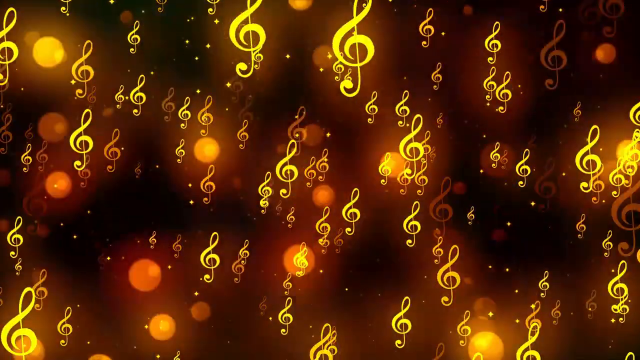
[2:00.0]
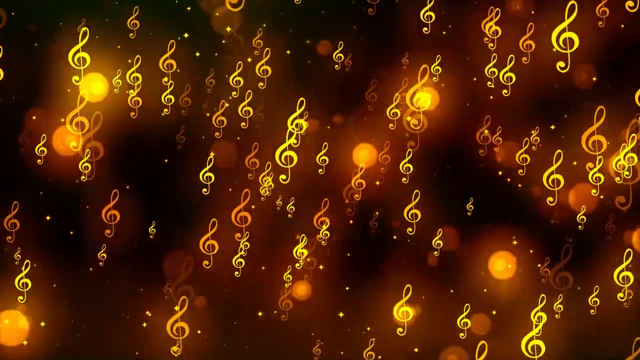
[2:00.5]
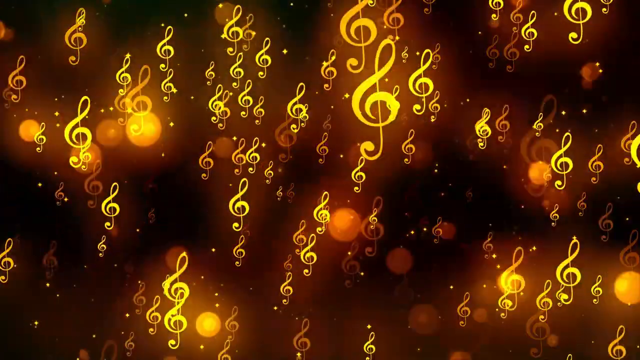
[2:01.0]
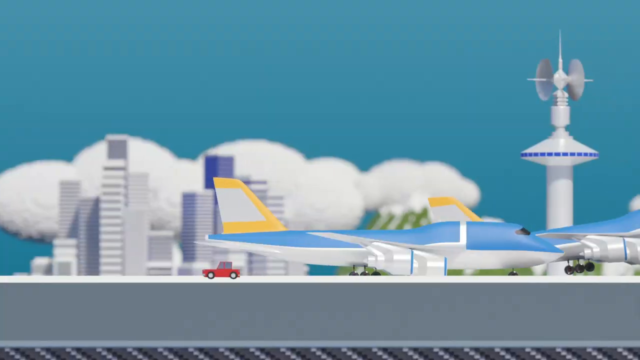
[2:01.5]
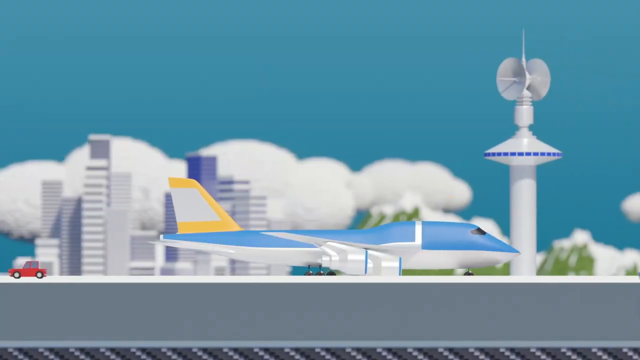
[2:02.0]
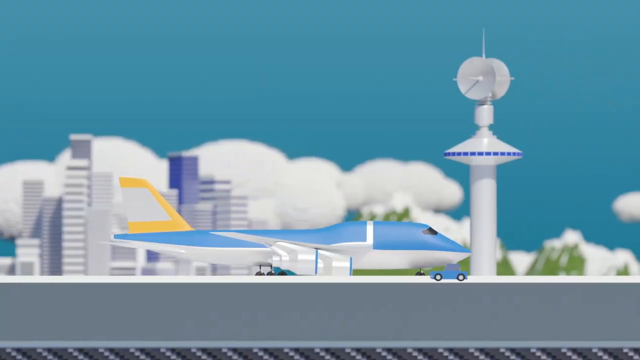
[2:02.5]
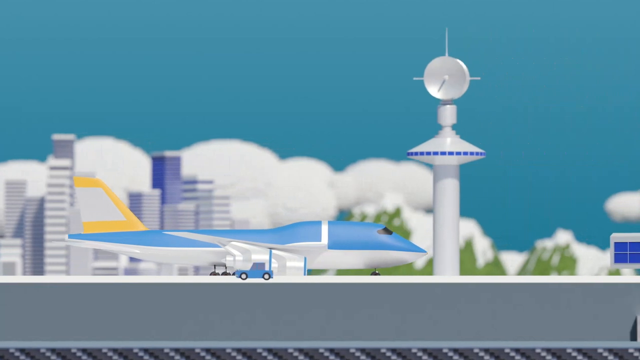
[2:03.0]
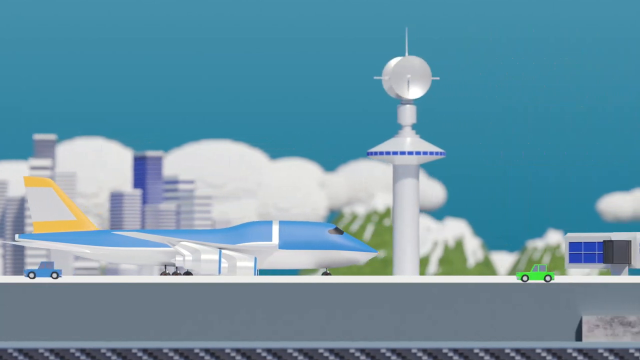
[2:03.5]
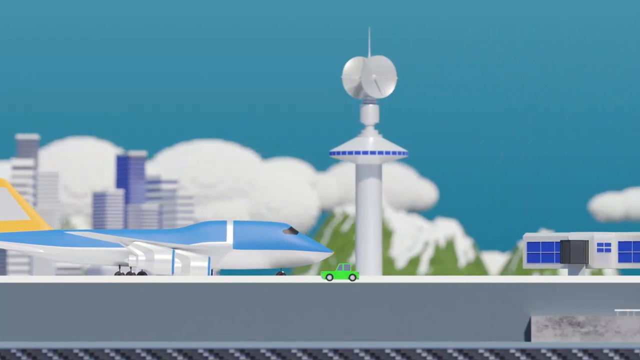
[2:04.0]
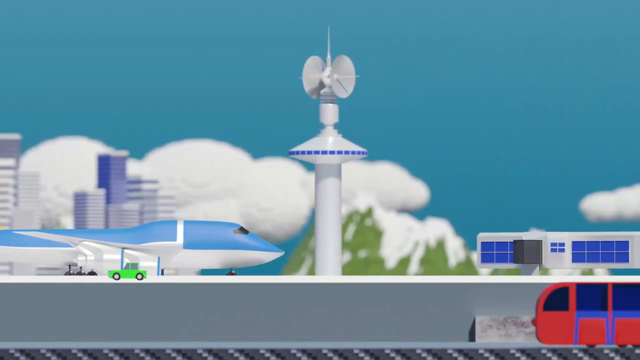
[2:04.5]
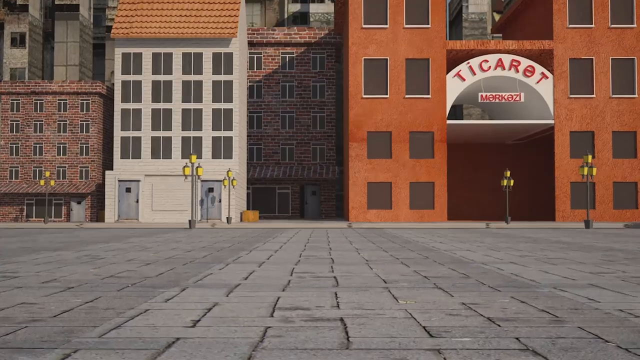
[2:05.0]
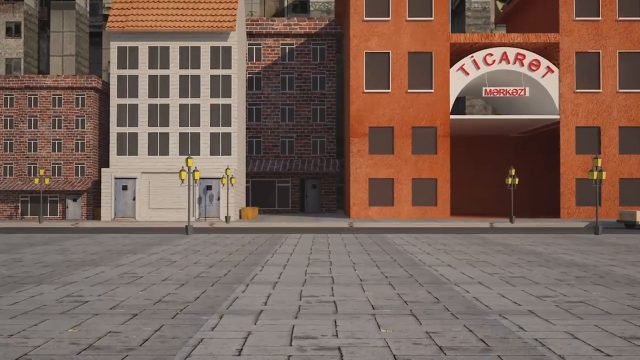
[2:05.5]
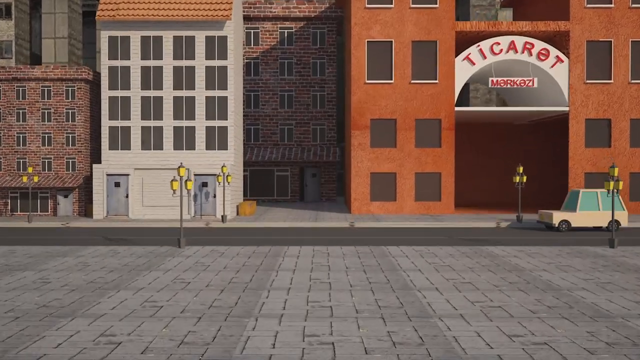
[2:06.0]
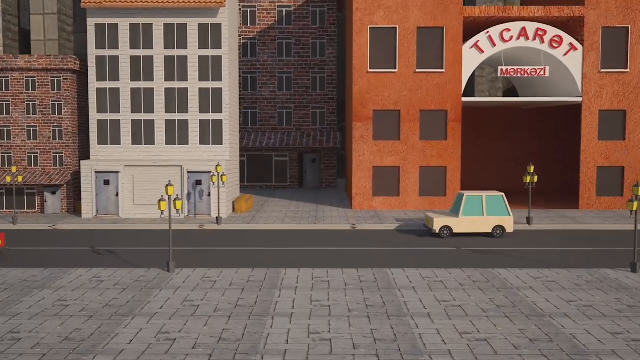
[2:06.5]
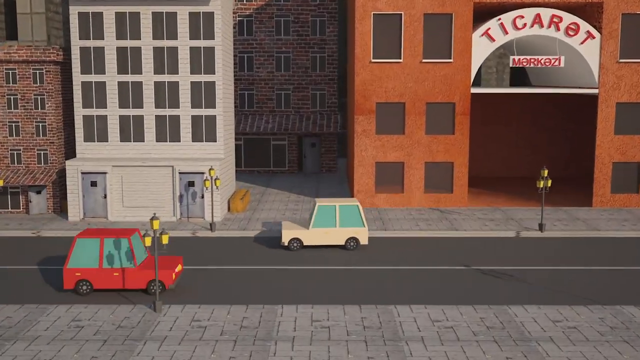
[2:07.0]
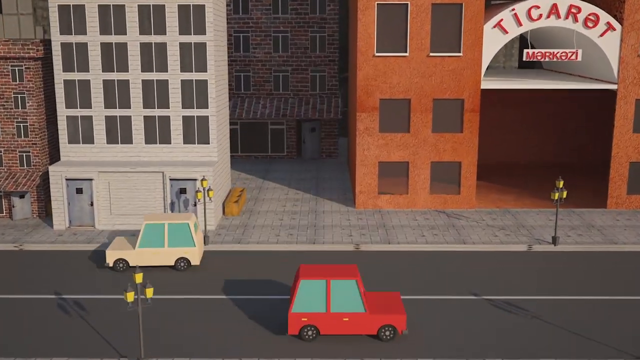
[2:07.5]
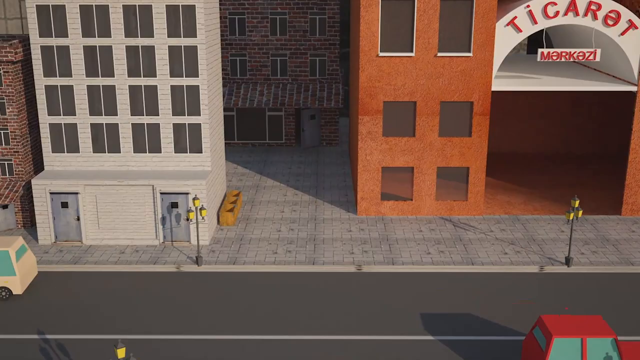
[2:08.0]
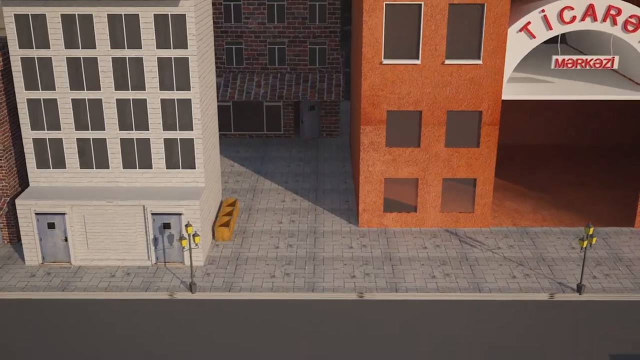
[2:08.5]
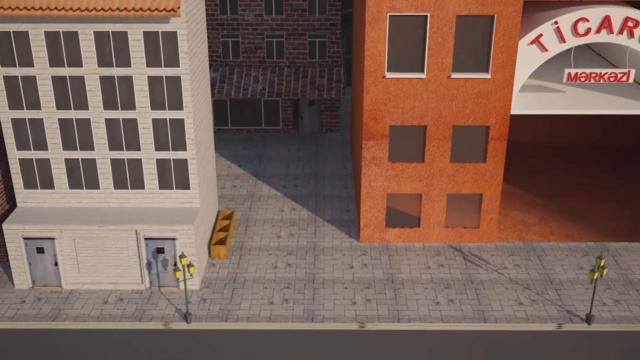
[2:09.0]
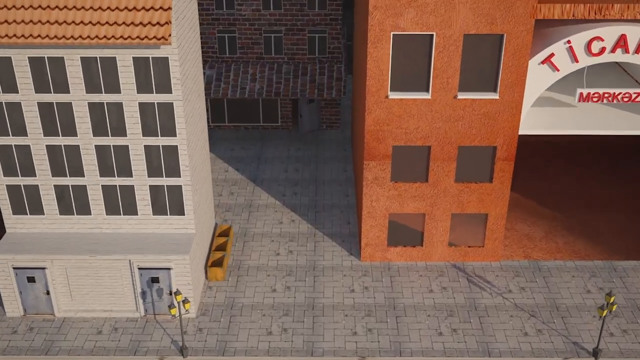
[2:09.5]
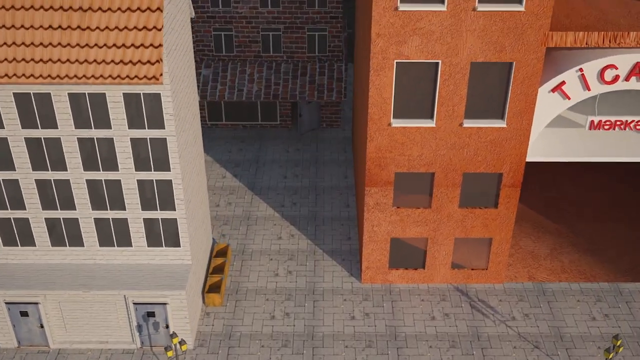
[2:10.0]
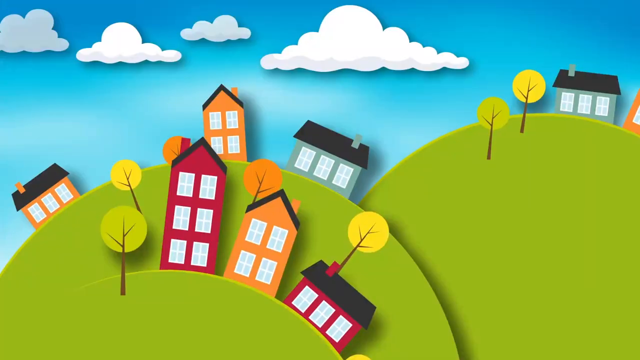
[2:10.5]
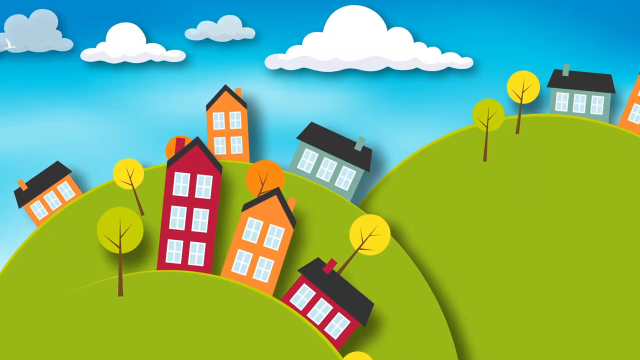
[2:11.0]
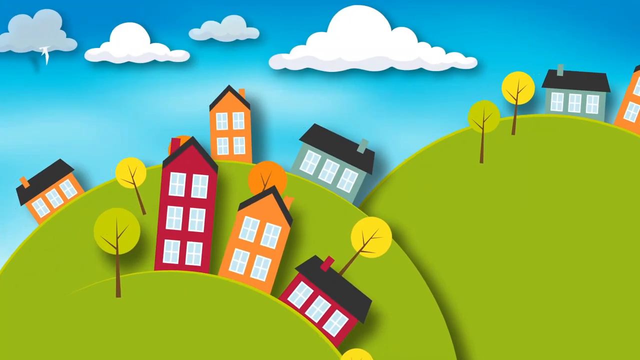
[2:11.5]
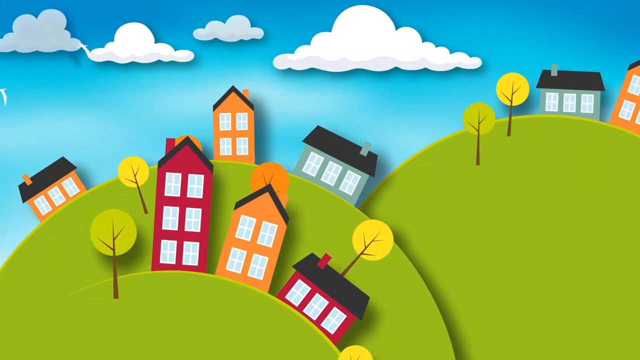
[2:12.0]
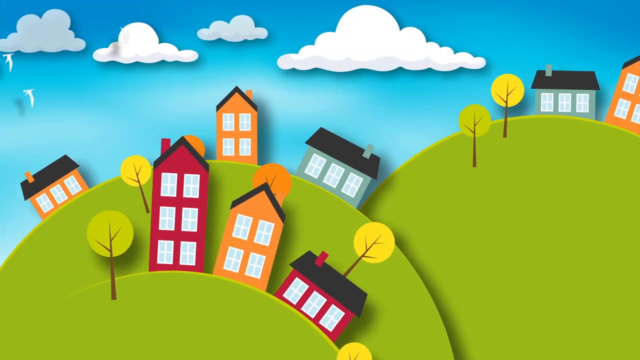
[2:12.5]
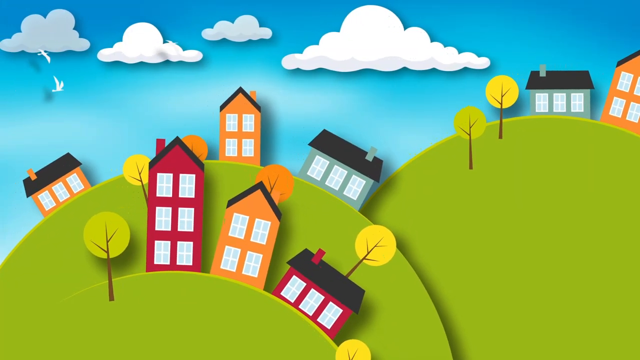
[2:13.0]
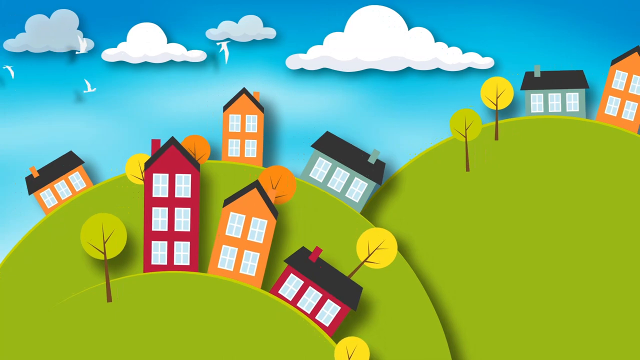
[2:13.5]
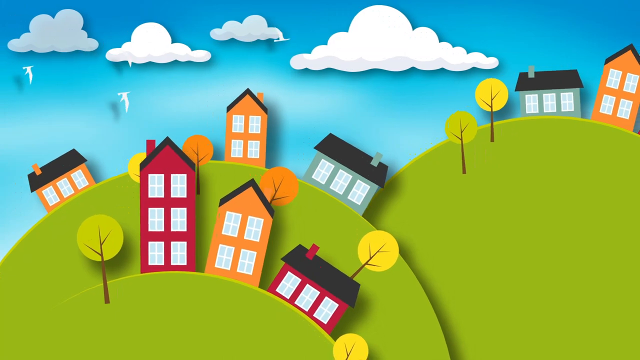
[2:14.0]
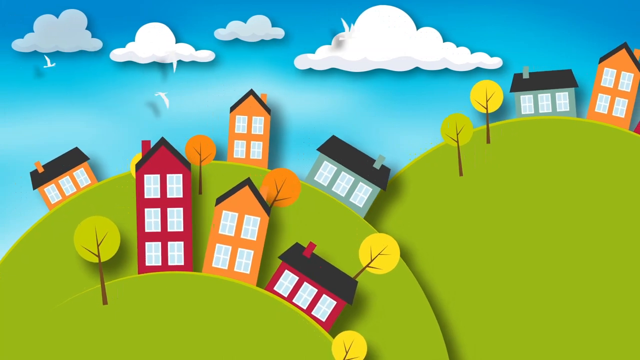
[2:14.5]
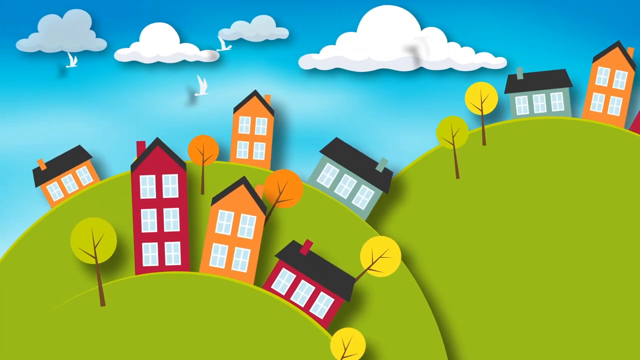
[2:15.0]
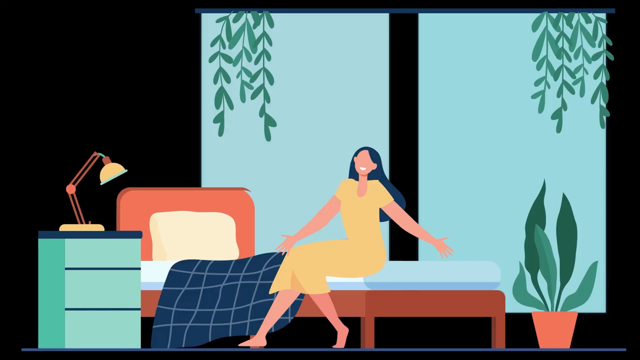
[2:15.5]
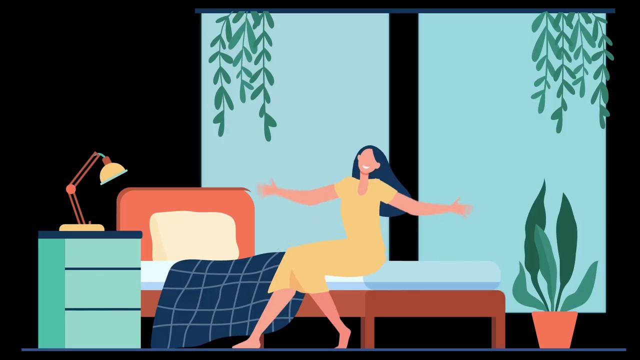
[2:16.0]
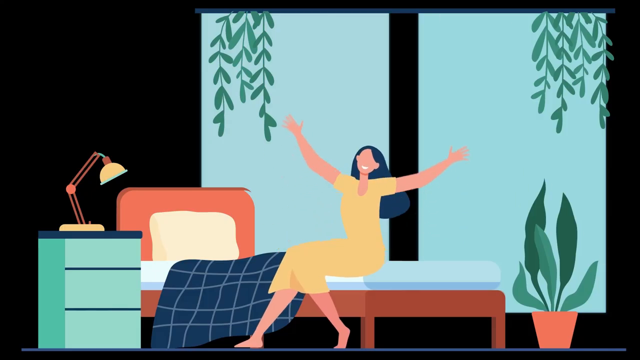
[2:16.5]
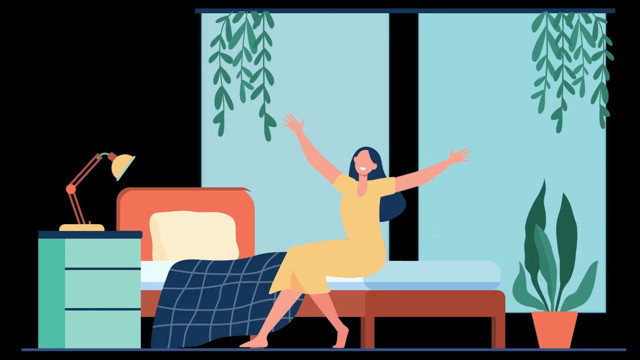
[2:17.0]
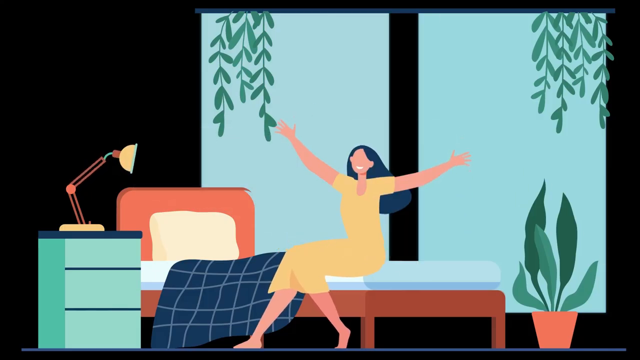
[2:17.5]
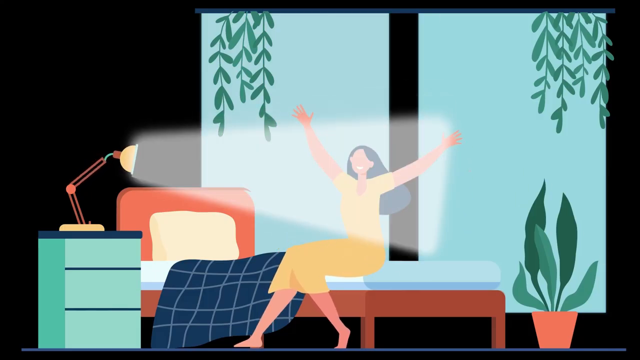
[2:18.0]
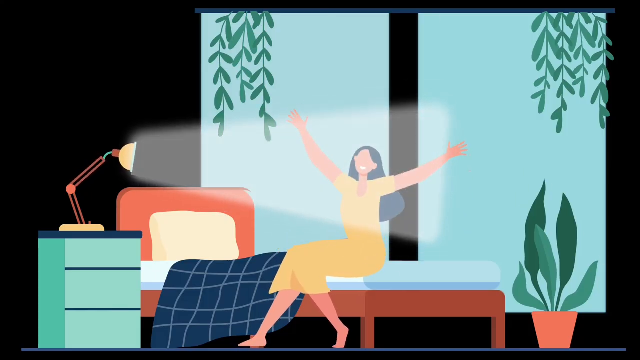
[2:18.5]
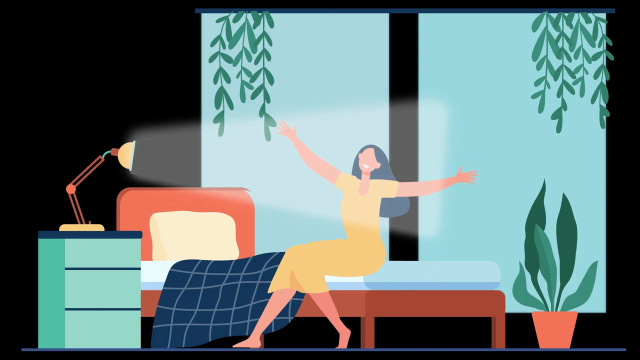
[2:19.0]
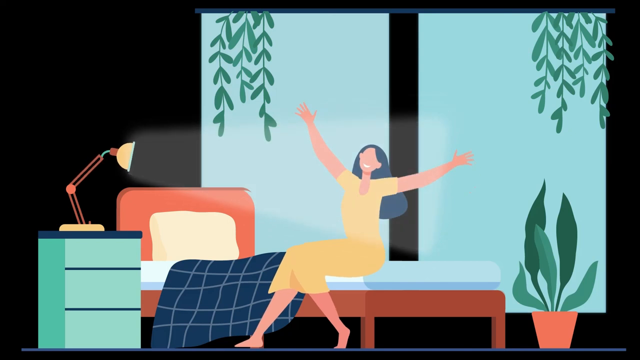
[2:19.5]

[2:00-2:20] Two airplanes are on the screen; one stays on the ground while the other takes off in the background. The scene transitions to an image of a city, with a building that has "Ticcaroo" on it and "Merquez". A car drives on the street in front of the buildings, and the view sort of zooms in on the alleyway between two buildings. The image changes to some hills with yellow, orange and green trees and houses, some three stories tall, some two stories and some one story, about three per hill, with the farthest back hill having only two; they sort of move around. Finally, a girl sits up in bed with her arms up and out, and her desk lamp turns on and shines on her.